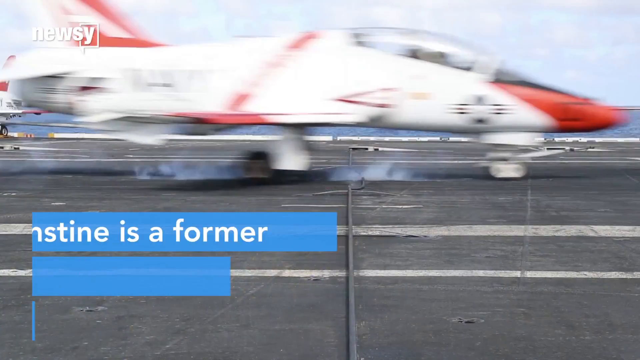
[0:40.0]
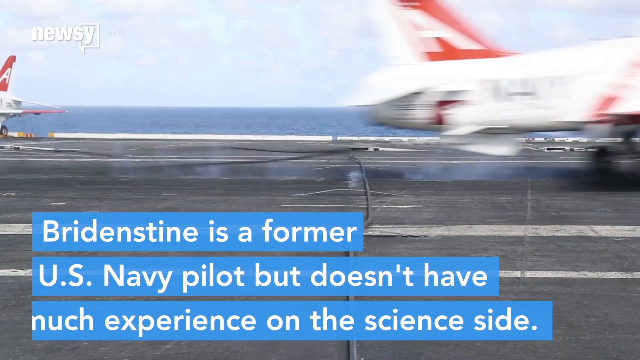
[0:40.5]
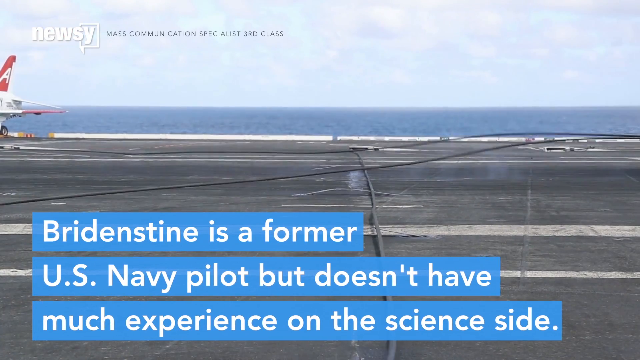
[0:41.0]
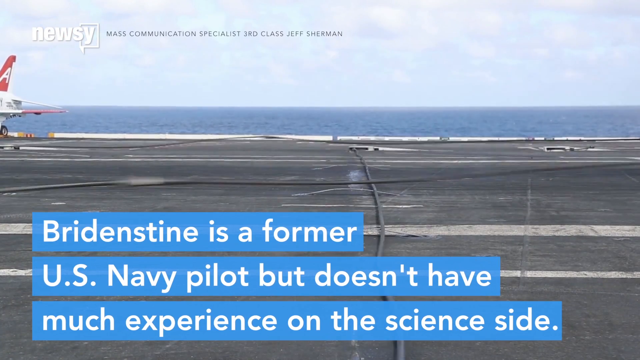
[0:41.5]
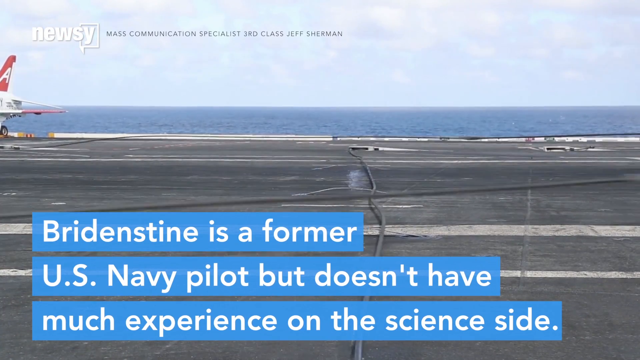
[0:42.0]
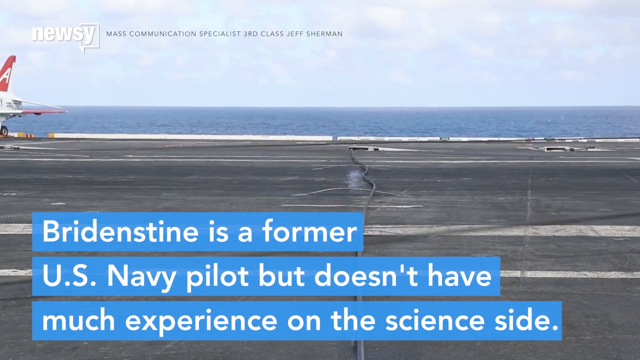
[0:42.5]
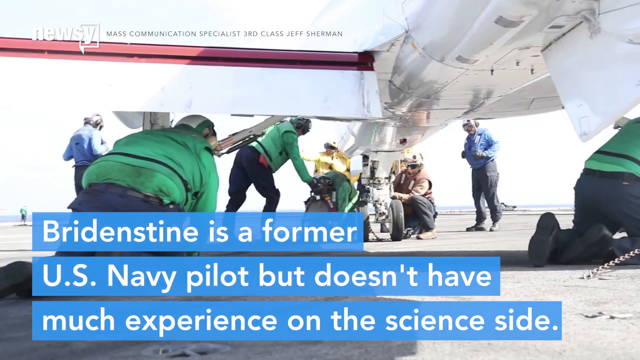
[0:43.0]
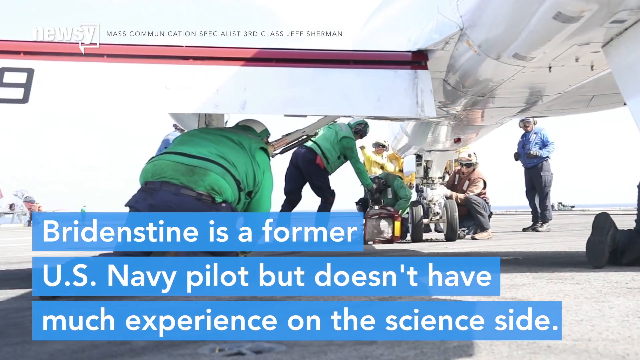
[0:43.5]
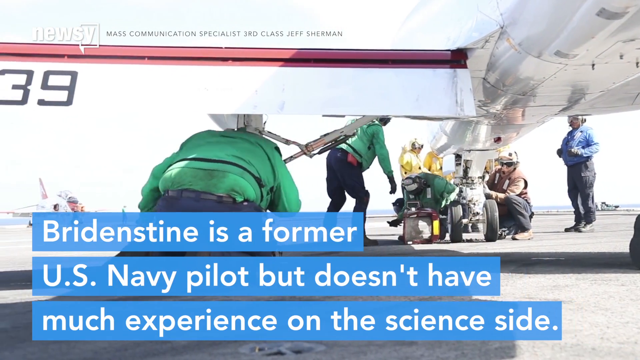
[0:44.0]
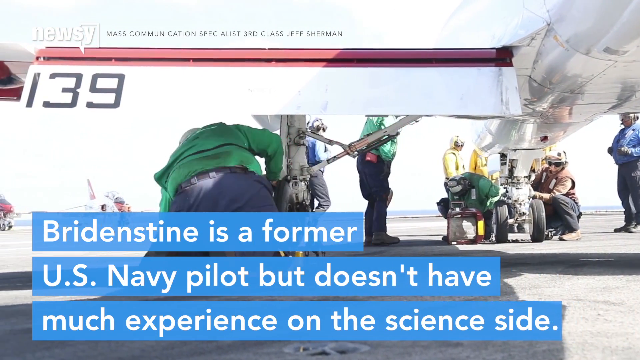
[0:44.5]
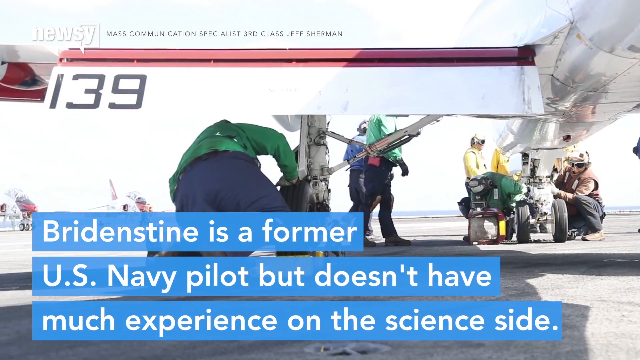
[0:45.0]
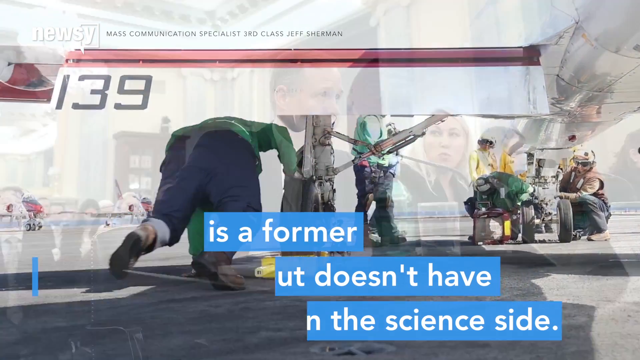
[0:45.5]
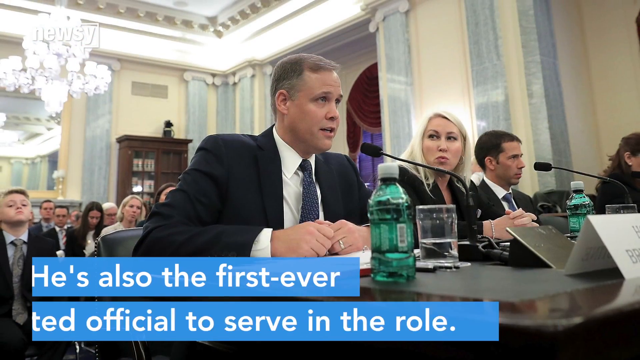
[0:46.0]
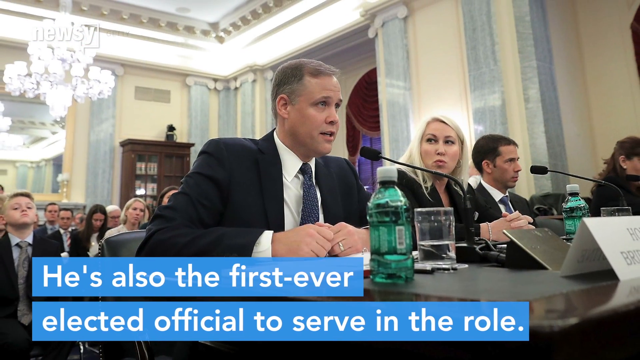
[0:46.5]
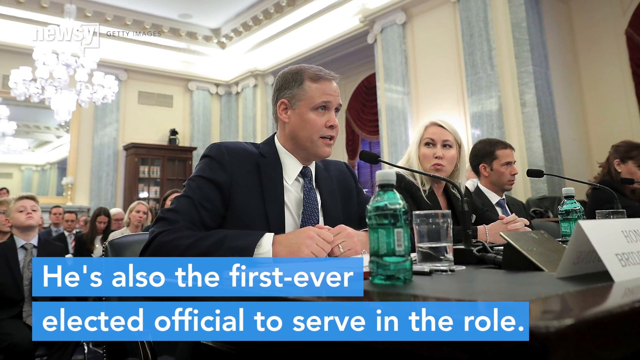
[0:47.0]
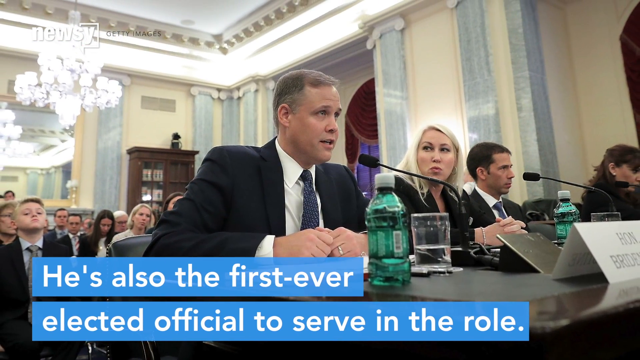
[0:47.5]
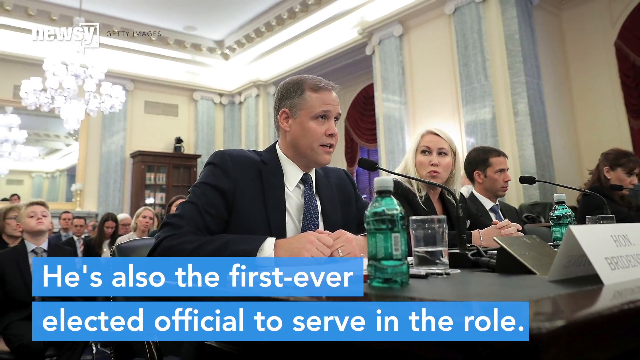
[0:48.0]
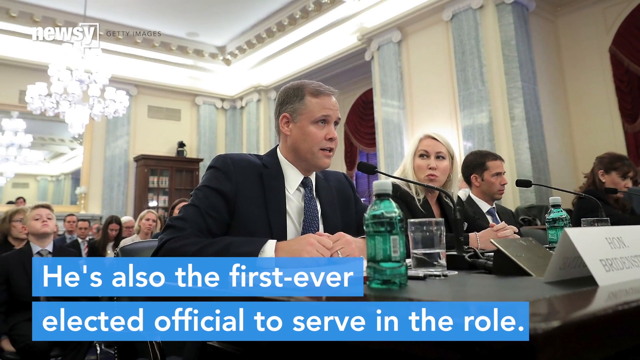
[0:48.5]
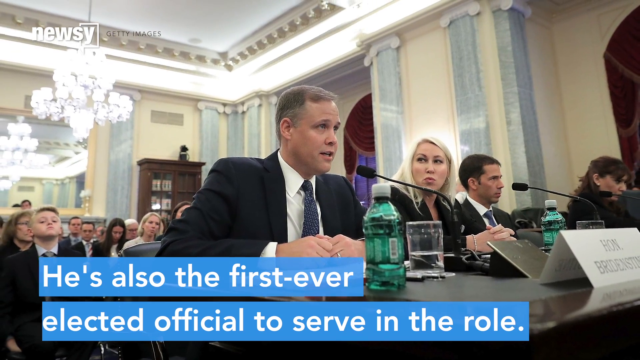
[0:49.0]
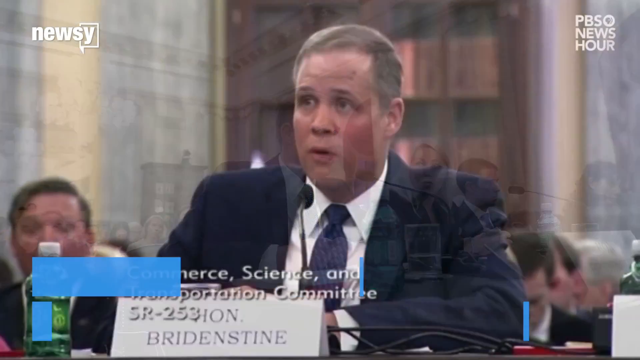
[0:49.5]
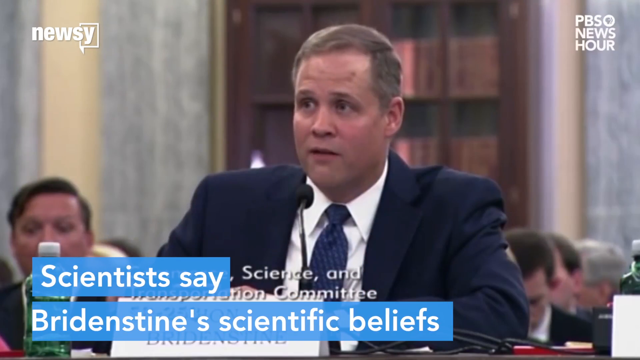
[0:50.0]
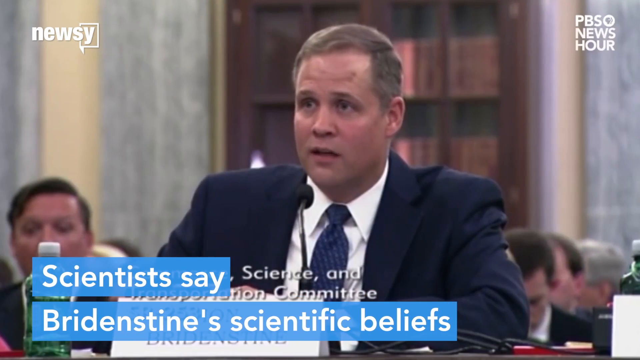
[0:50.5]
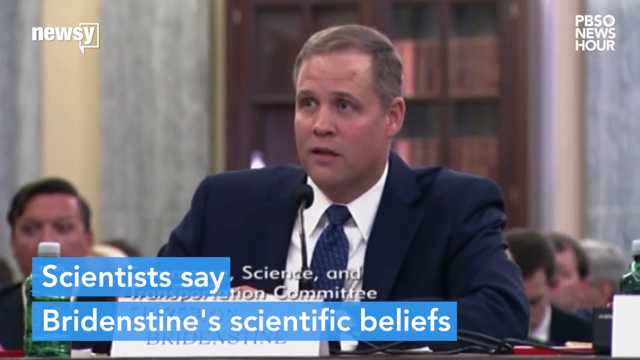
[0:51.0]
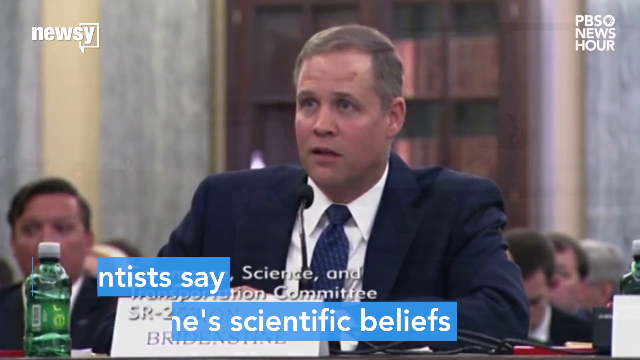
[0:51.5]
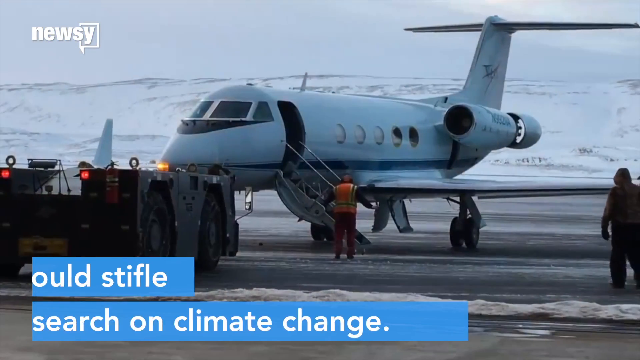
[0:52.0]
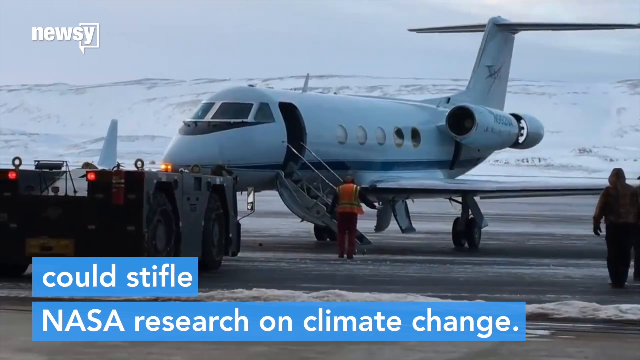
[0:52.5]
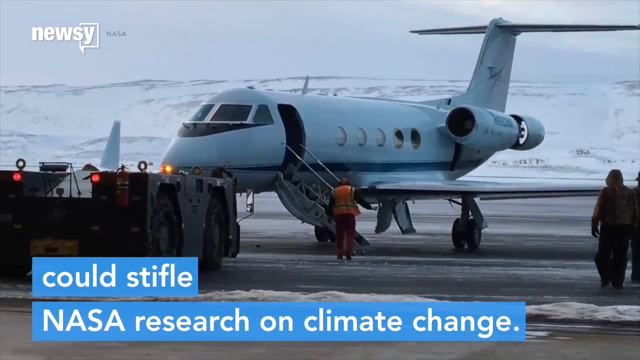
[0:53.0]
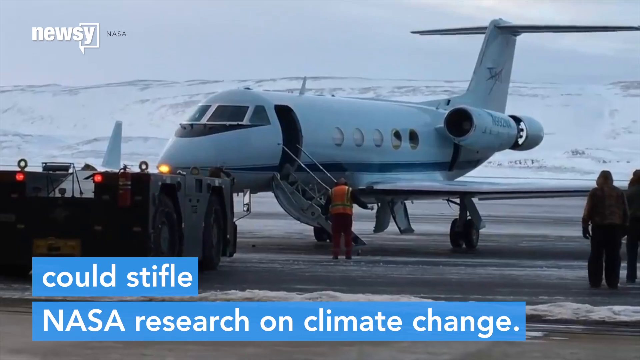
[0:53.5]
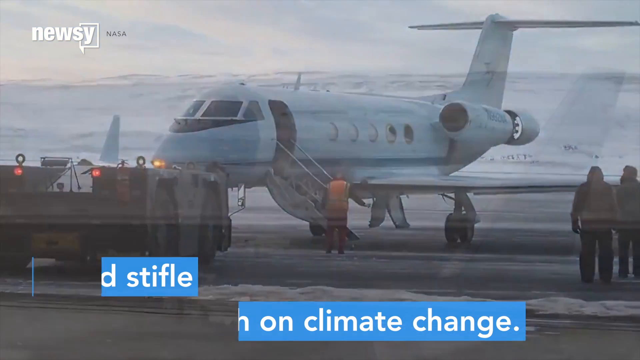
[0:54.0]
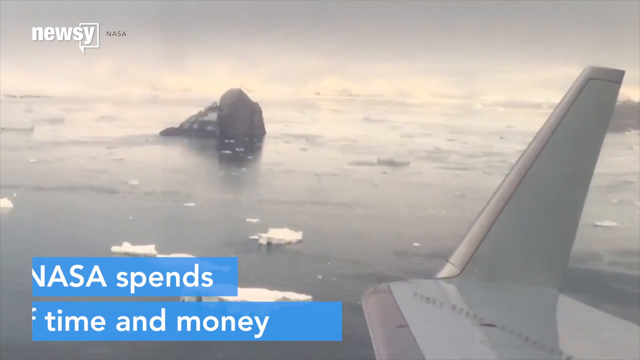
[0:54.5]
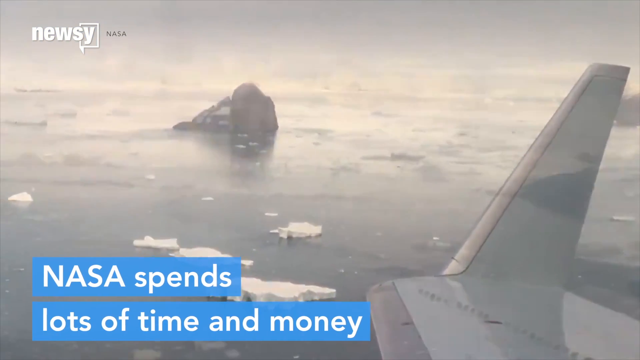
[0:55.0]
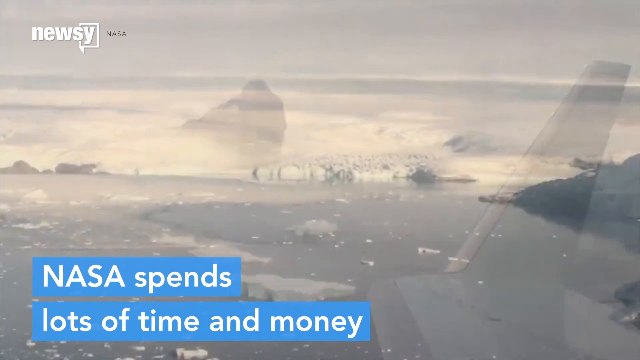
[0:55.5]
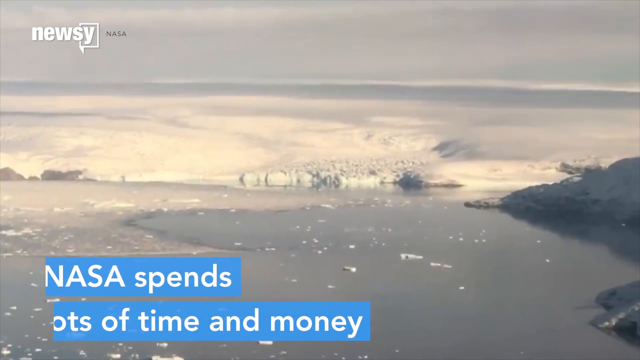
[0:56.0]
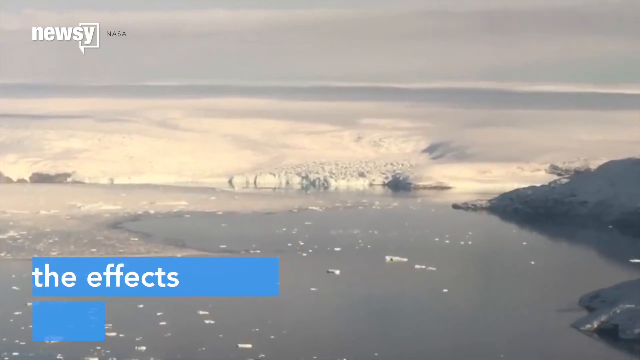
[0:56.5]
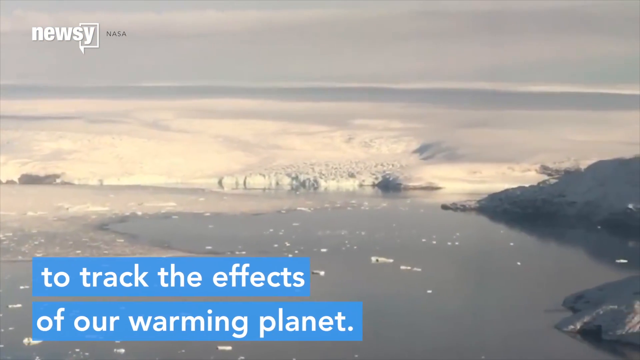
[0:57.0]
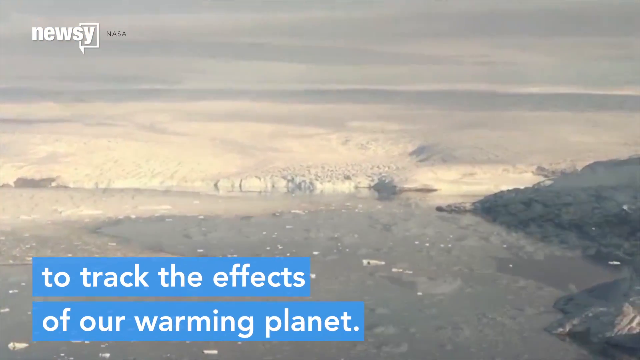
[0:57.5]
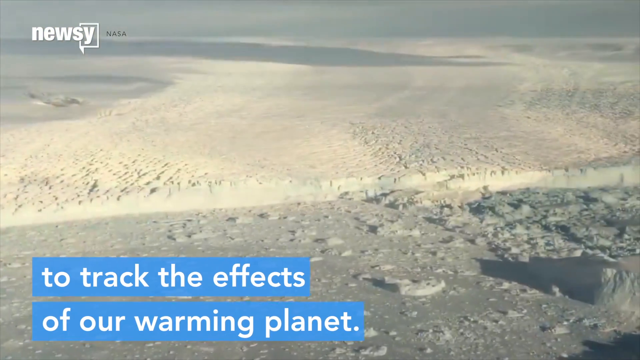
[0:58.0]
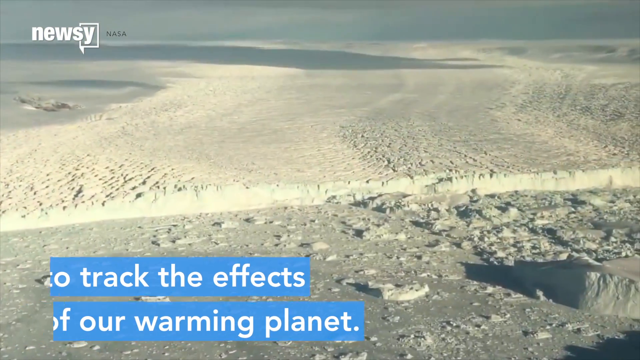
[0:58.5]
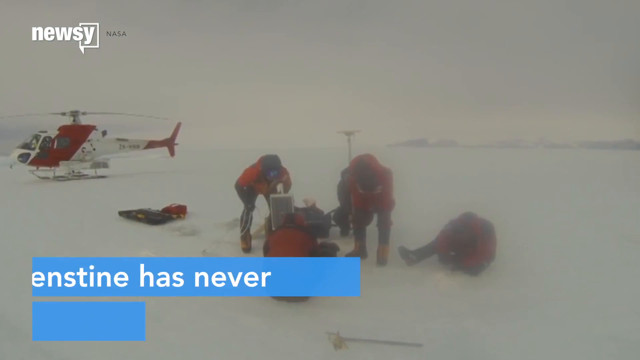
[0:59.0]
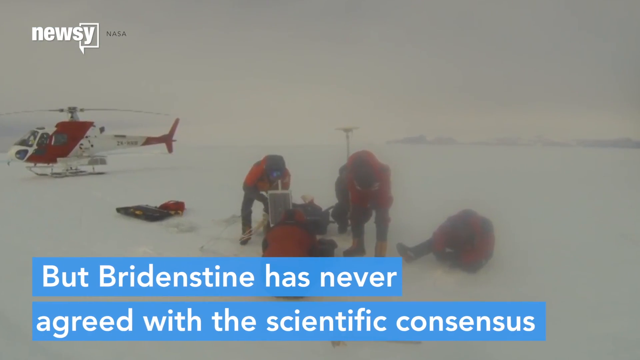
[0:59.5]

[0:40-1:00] A white fighter jet seems to be leaving what looks like an air carrier, with blue water representing the ocean in the background. The jet is blue and white. Another white airplane follows, with people under it who seem to be engineers operating it; they wear green tops, blue pants and brown shoes. The scene switches to the inside of a building with multiple people, a white ceiling and grey pillars mounted on the walls. Closest to the camera, on the left, is a white man with short grey hair in a black suit, a white shirt and a blue tie, with a ring on his left hand. In the middle is a white woman with blonde hair wearing a black suit with a black t-shirt inside. On the far right is another white man with short black hair in a black suit, a white shirt and a blue tie. On the table they sit behind are blue water bottles and glasses with water in them.